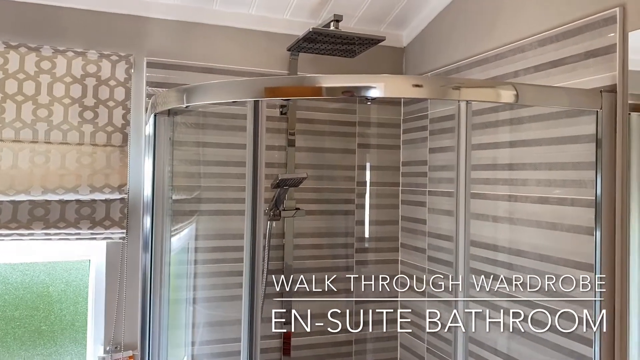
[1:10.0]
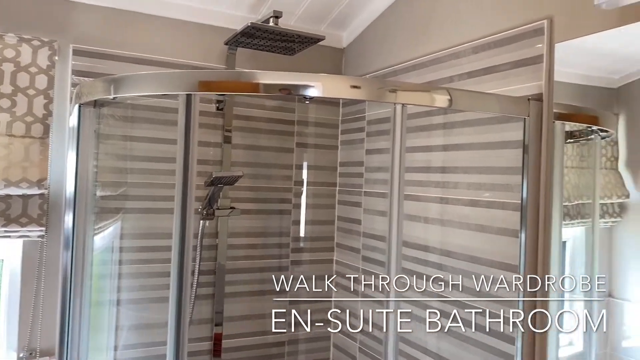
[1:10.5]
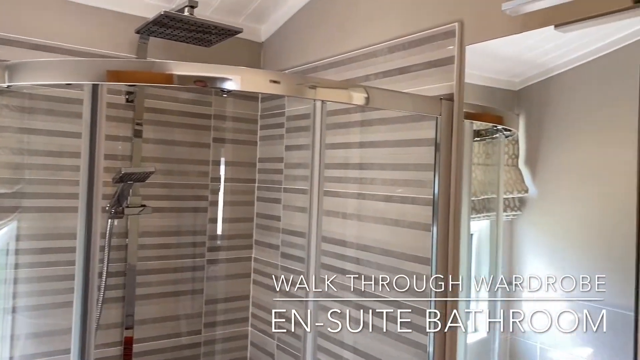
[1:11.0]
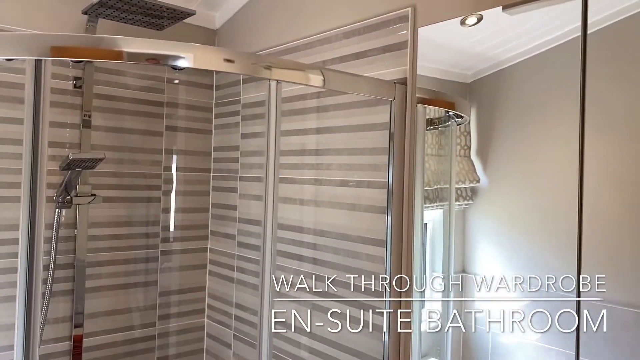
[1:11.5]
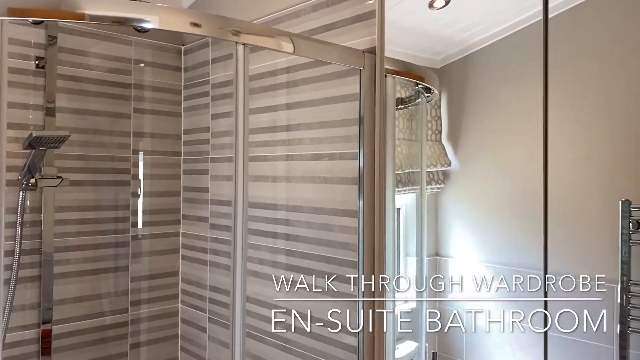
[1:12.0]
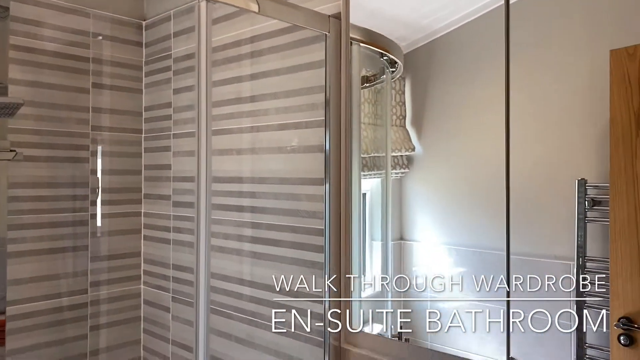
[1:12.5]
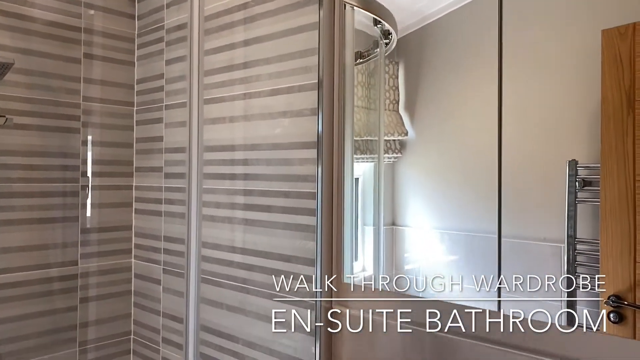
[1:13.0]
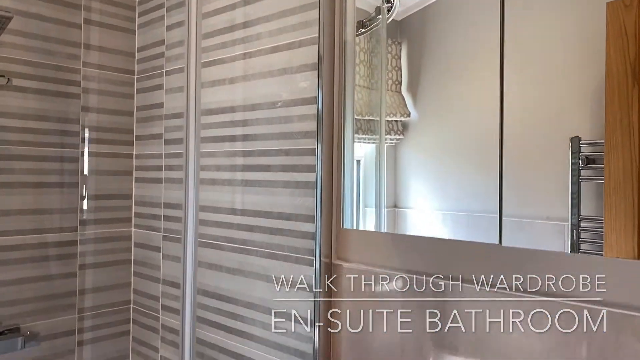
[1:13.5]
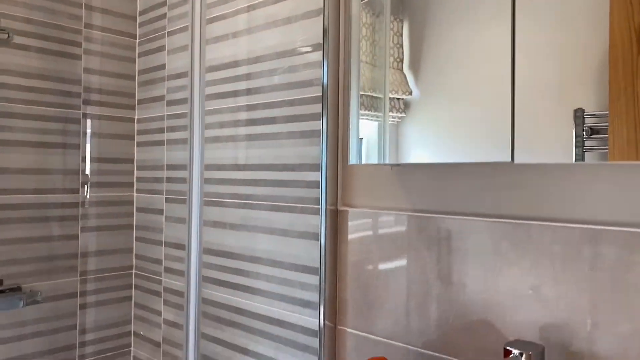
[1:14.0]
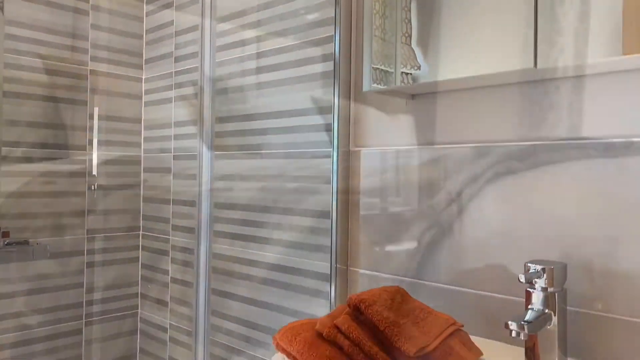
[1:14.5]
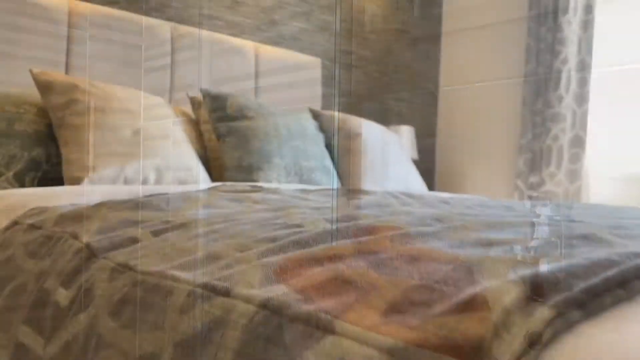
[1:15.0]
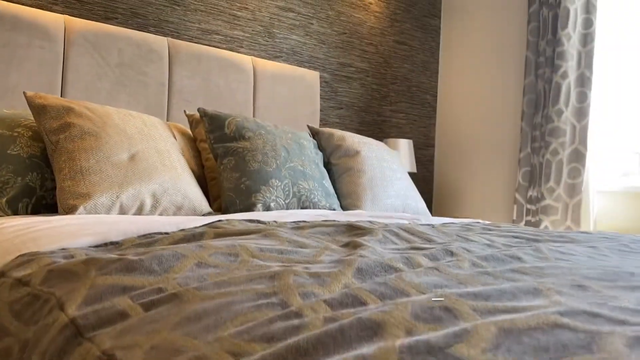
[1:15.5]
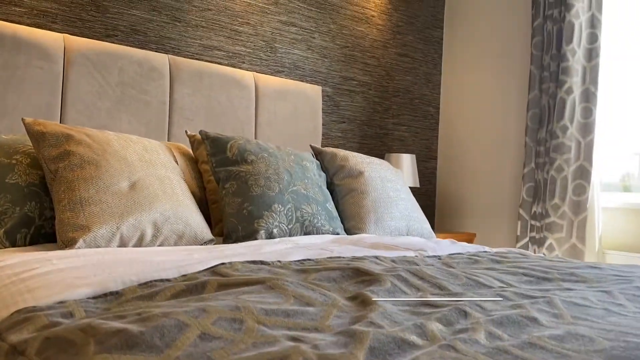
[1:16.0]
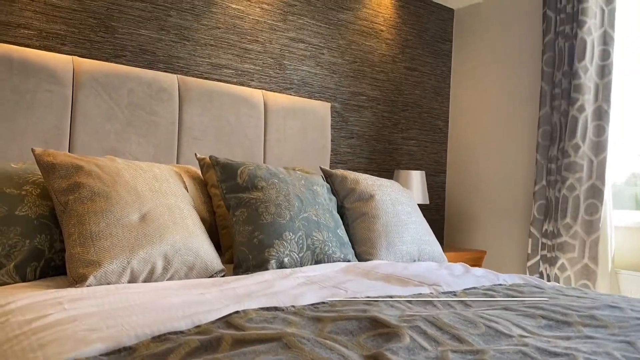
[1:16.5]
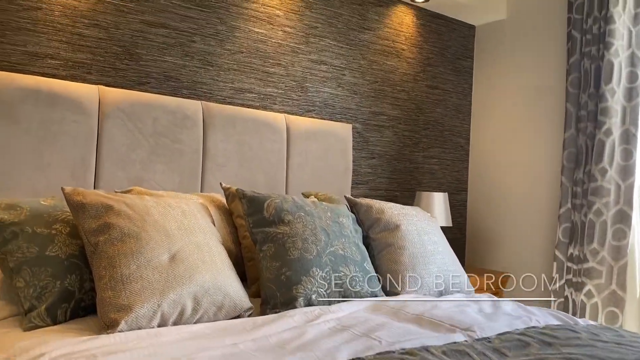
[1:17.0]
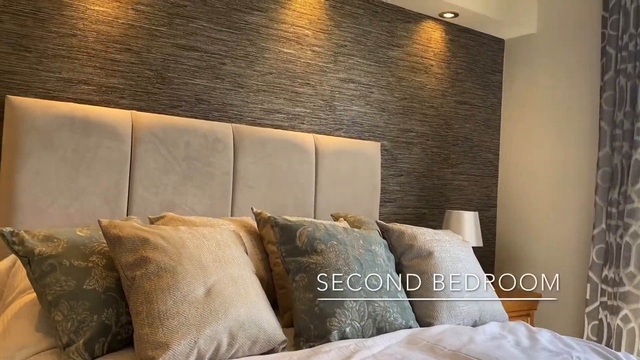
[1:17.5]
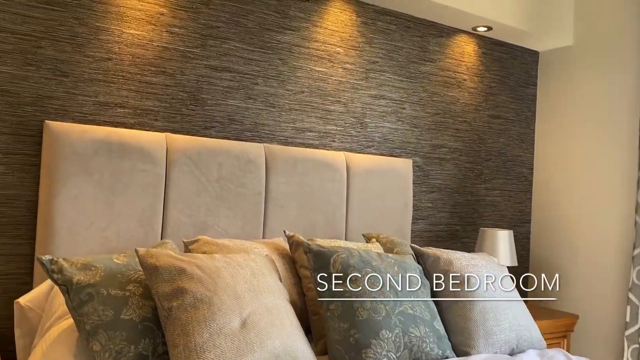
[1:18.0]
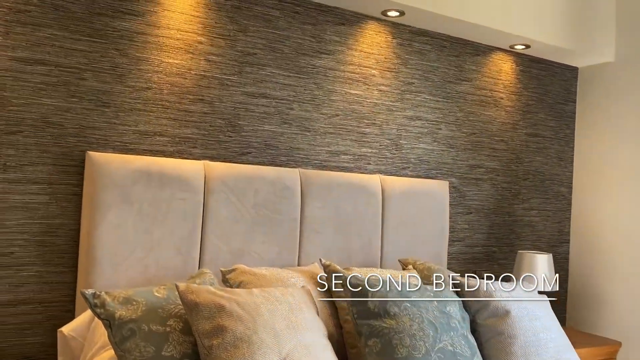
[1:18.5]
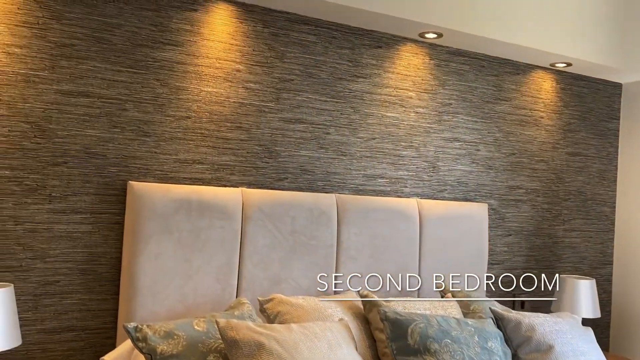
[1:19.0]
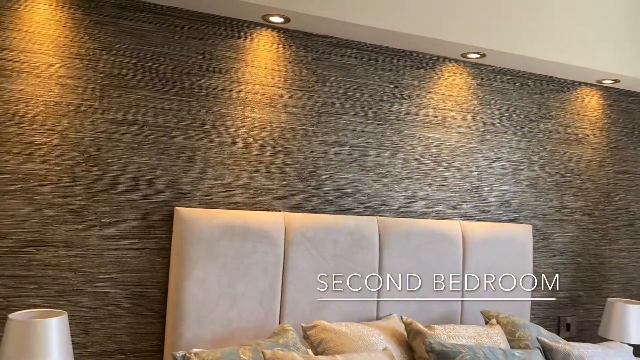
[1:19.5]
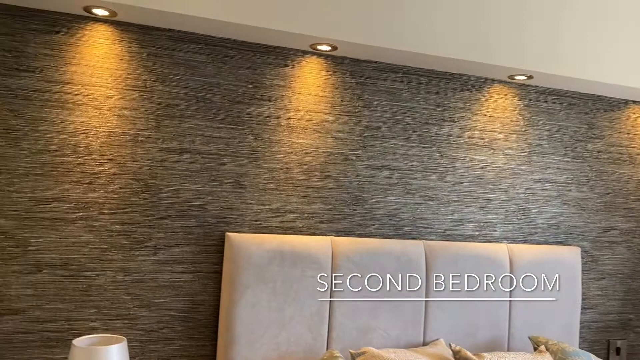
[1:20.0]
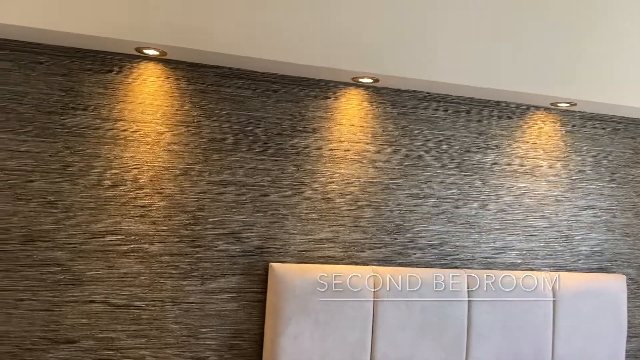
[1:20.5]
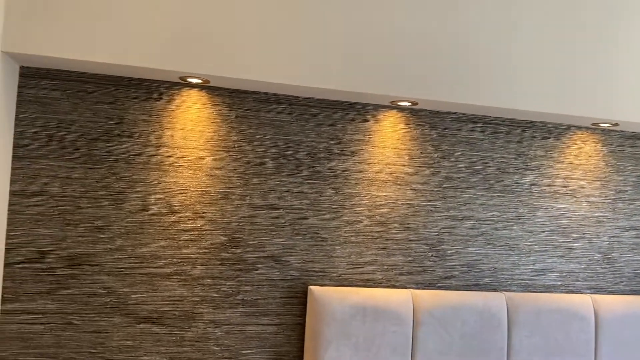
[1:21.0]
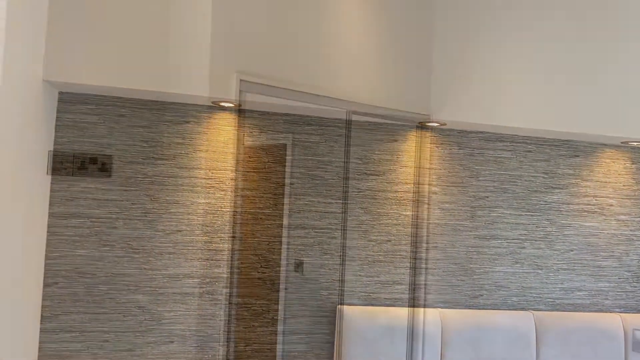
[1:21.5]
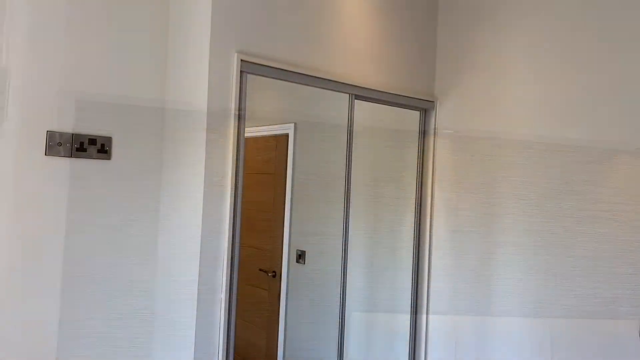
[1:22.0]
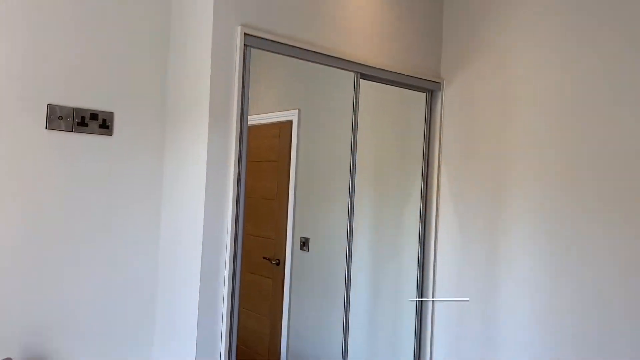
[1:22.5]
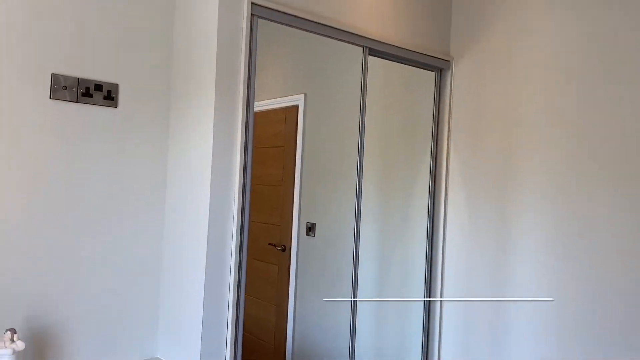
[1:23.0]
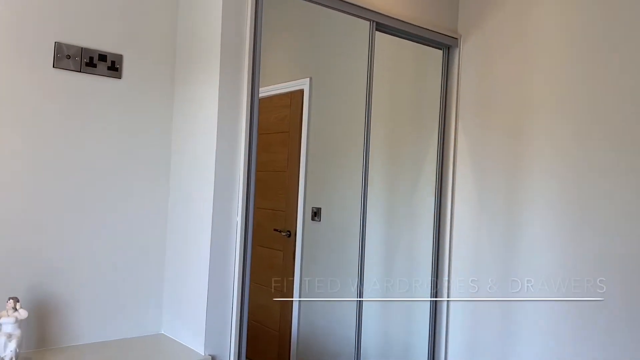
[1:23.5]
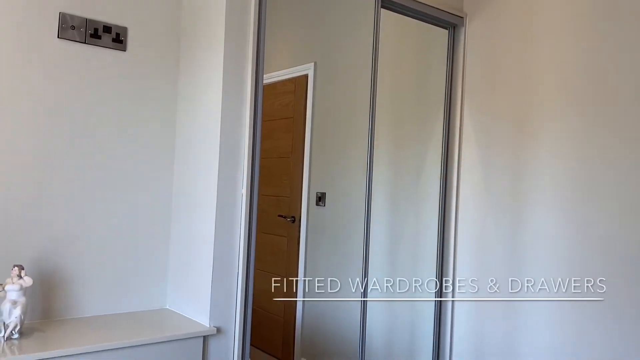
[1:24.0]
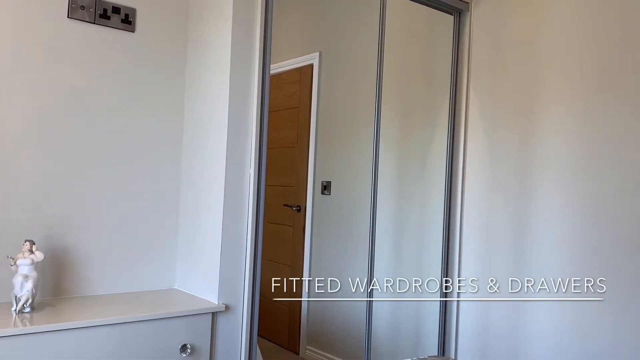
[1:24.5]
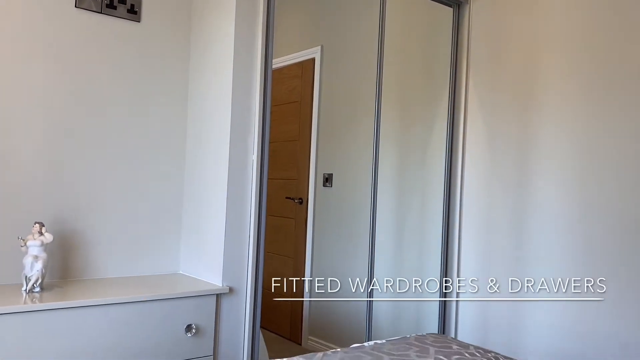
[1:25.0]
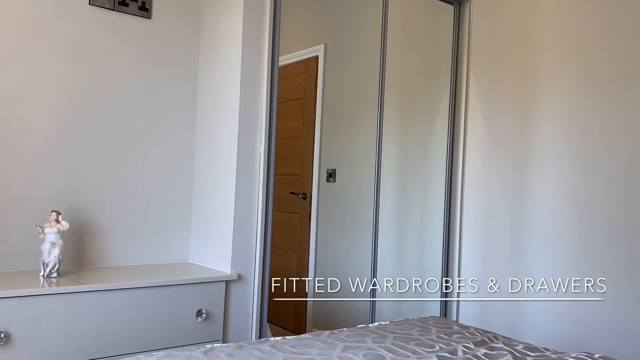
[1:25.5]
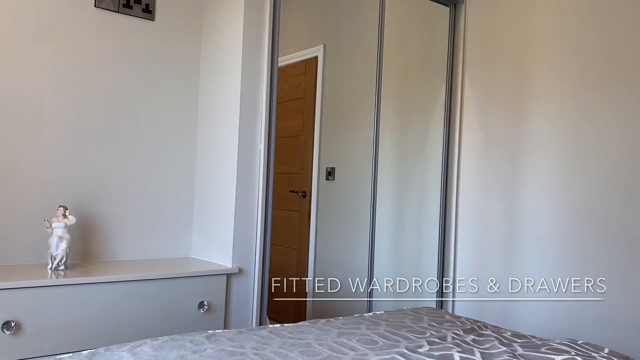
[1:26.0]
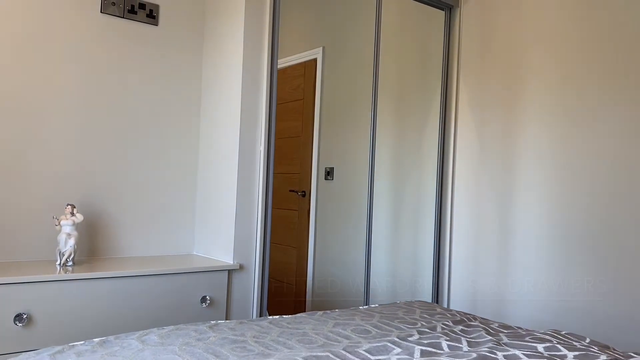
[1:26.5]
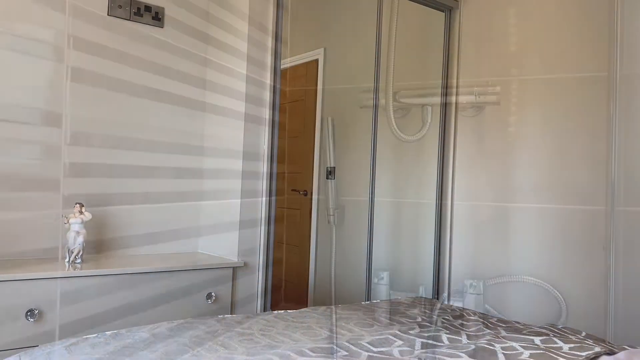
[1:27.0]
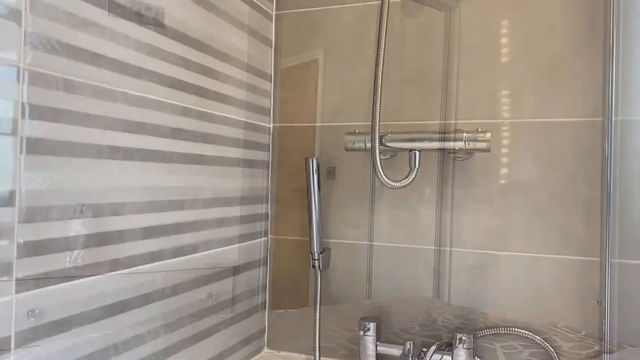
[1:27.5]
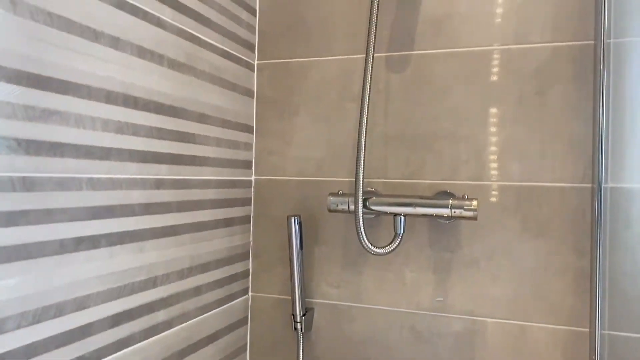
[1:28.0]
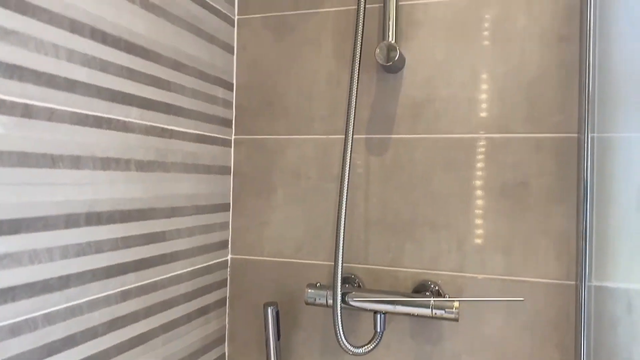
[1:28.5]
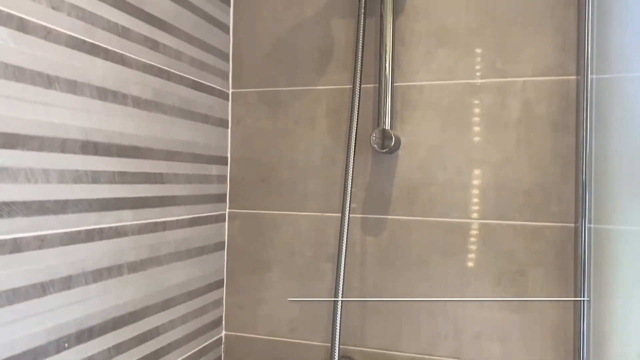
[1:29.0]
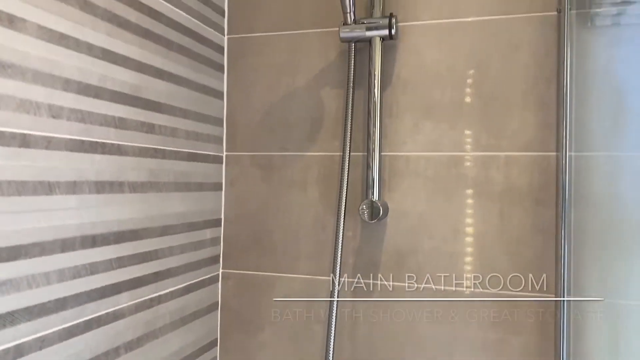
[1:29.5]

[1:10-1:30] The camera pans right in the bathroom and looks through the wooden door section, which seems like it might actually be a different section: below and to the right of the shower wall there is a faucet with several orange towels beside it. Inside is another bed with slightly differently arranged pillows, and a caption reads "second bedroom." This bed has a green pillow in the middle, two sort of beige pillows on the left and right, and more pillows behind; no white pillows are visible. The video then moves to a different shot of a wooden door, in the hallway or inside a different room, with perhaps another bed or the end of a bed. There is a white cabinet, a white figure statue sitting on a chair, and captions on the right reading "fitted wardrobes and drawers." The view then goes inside another shower, which has just a handheld shower head.